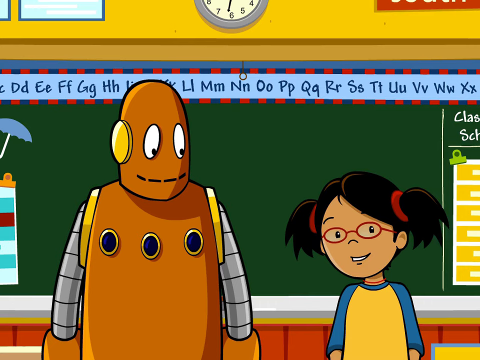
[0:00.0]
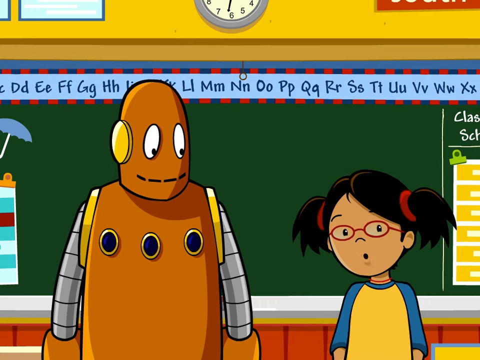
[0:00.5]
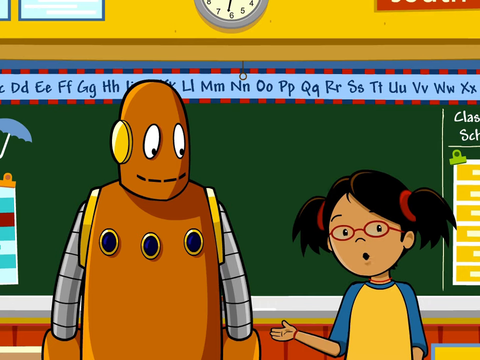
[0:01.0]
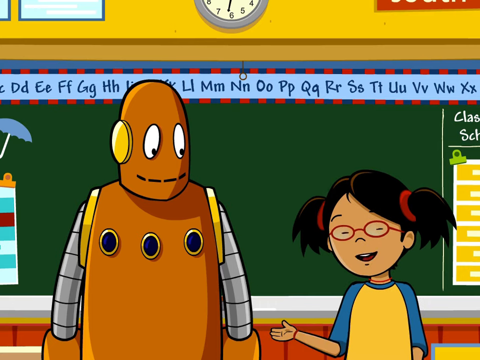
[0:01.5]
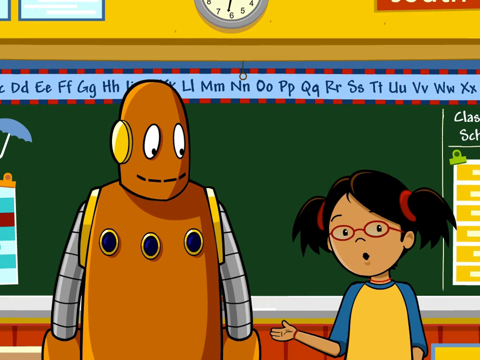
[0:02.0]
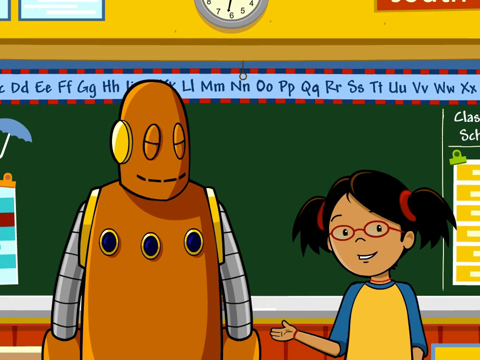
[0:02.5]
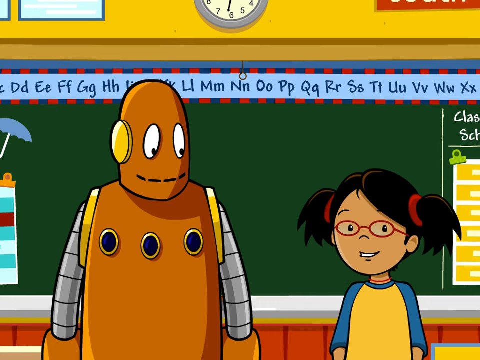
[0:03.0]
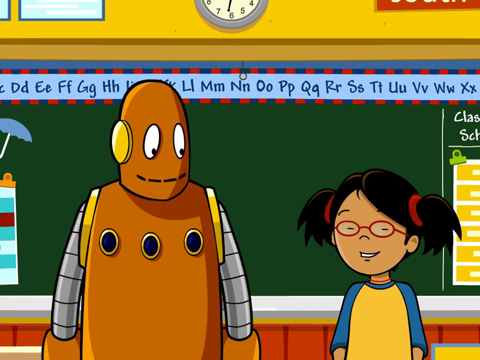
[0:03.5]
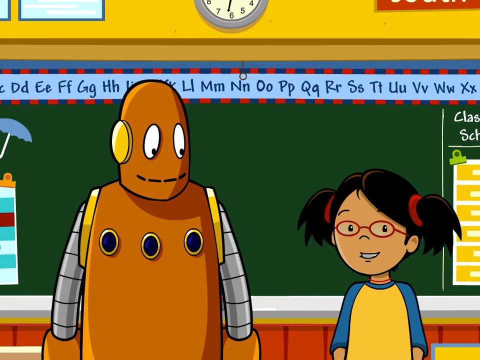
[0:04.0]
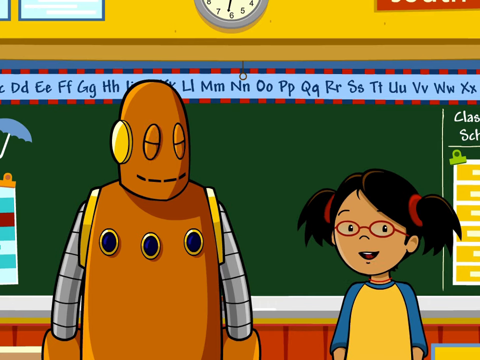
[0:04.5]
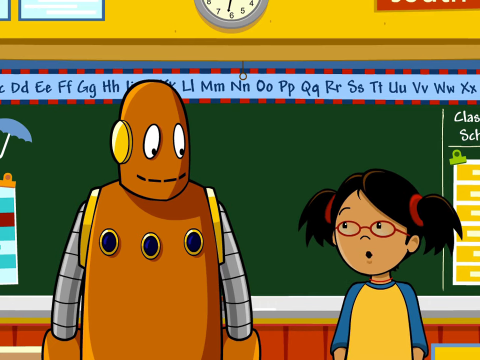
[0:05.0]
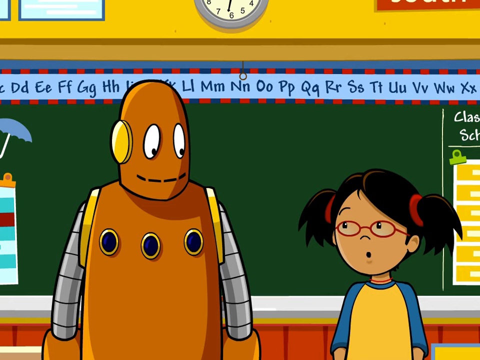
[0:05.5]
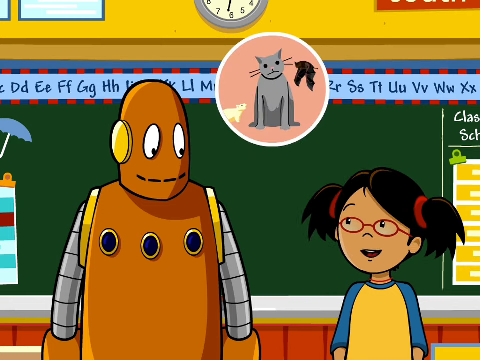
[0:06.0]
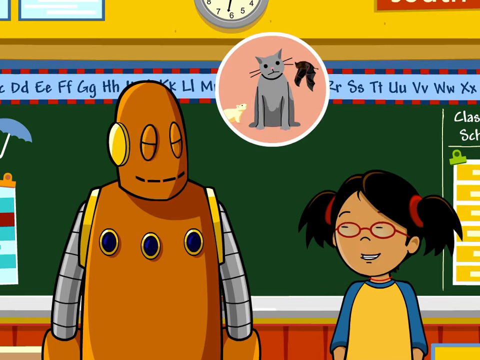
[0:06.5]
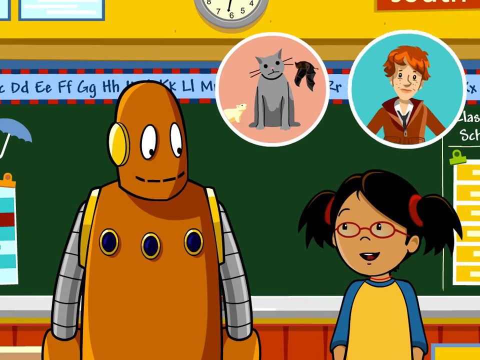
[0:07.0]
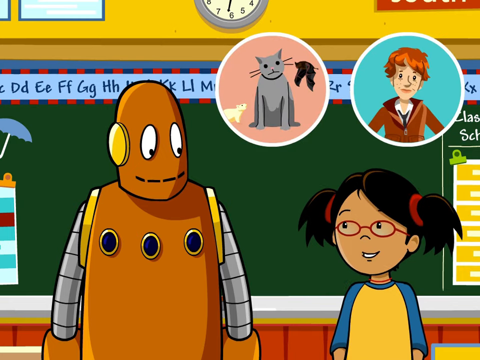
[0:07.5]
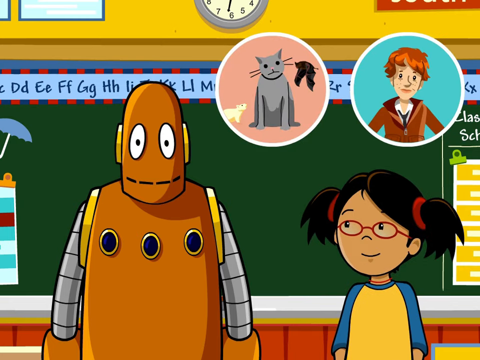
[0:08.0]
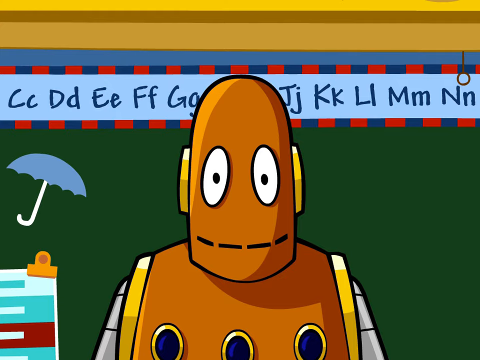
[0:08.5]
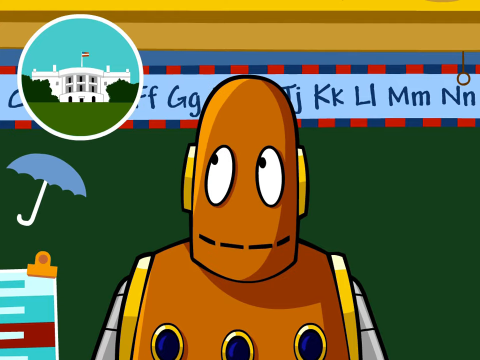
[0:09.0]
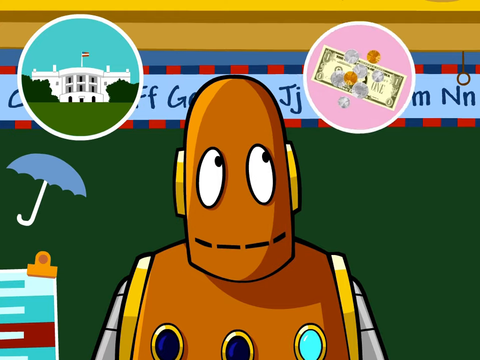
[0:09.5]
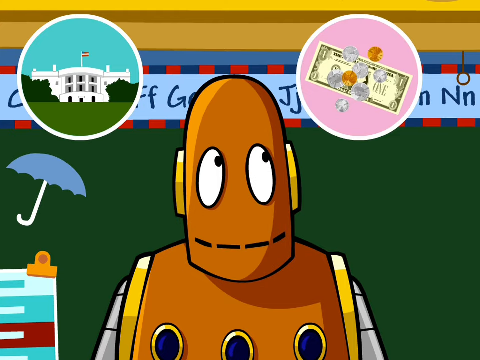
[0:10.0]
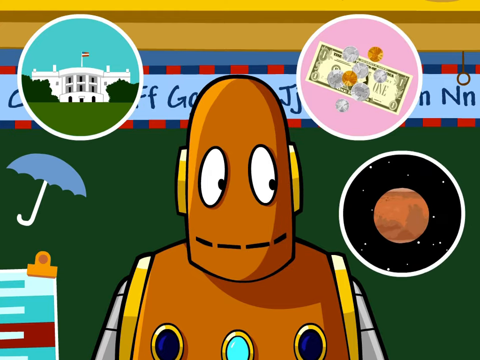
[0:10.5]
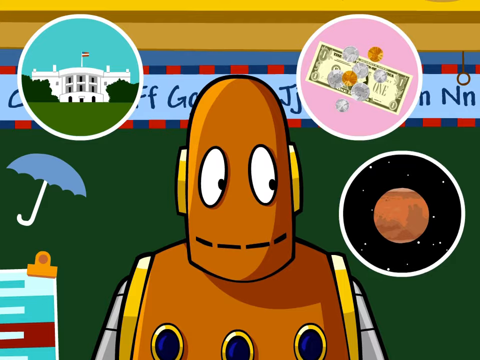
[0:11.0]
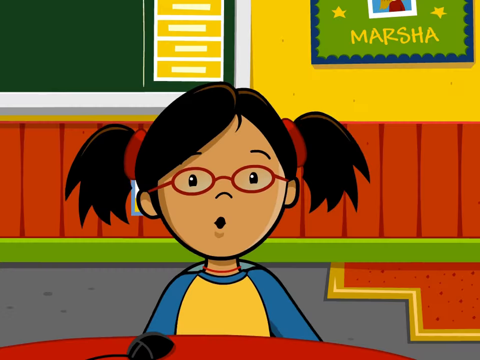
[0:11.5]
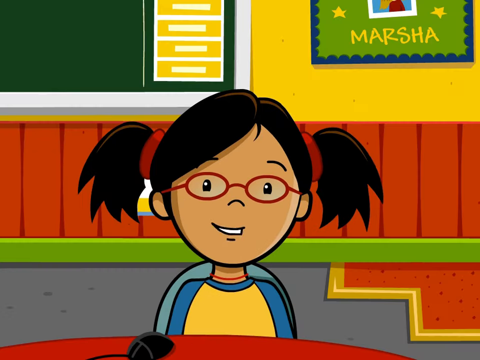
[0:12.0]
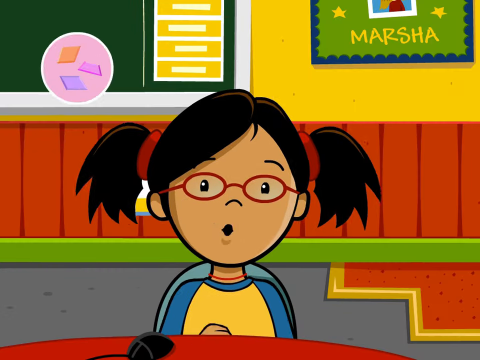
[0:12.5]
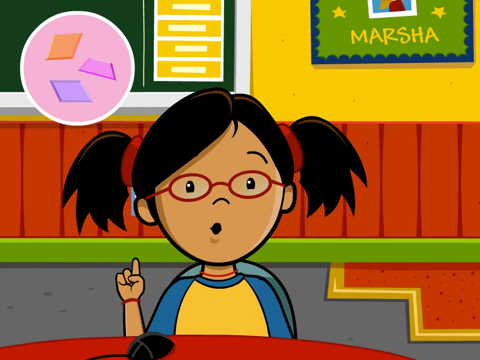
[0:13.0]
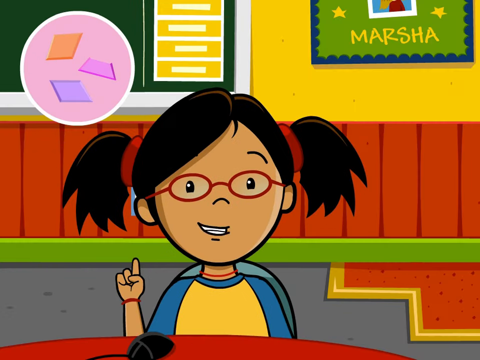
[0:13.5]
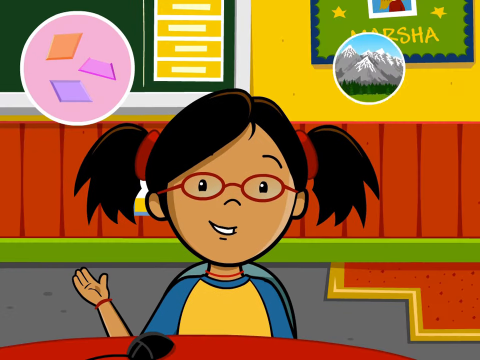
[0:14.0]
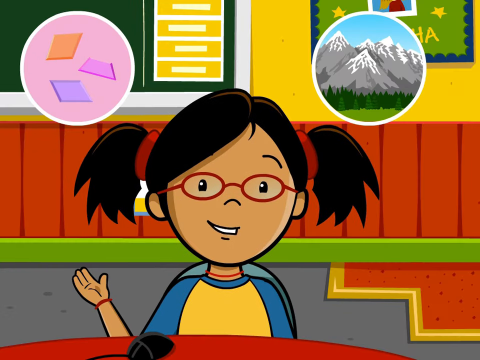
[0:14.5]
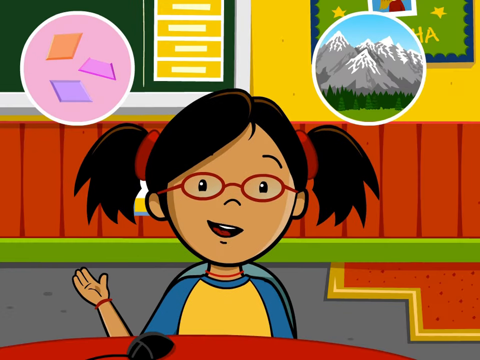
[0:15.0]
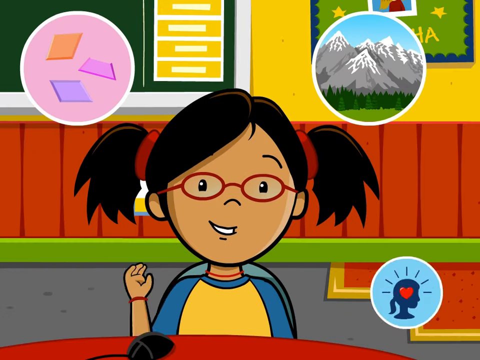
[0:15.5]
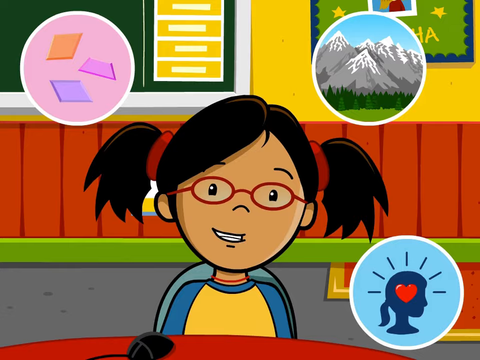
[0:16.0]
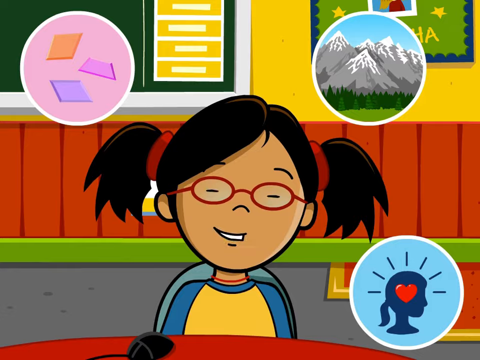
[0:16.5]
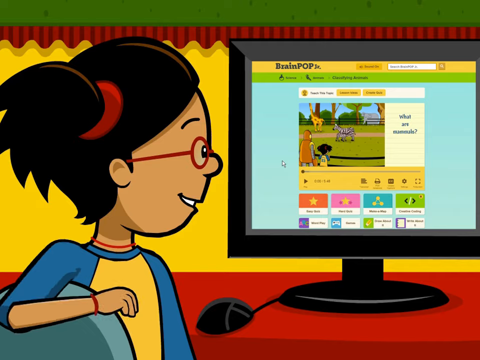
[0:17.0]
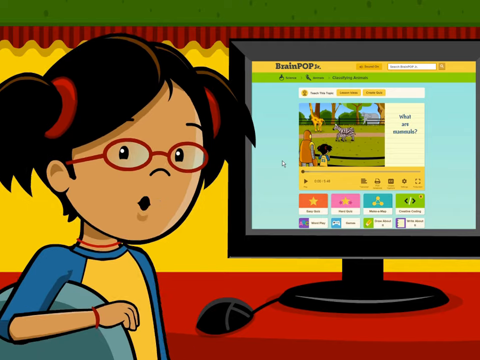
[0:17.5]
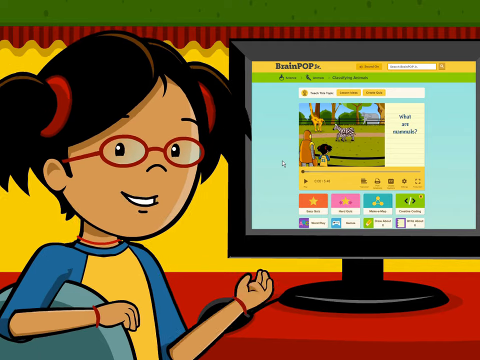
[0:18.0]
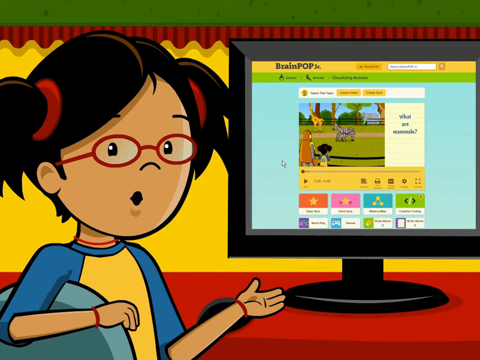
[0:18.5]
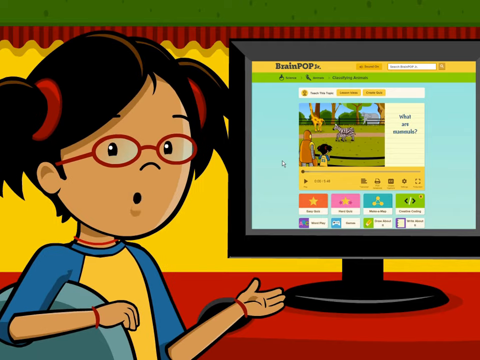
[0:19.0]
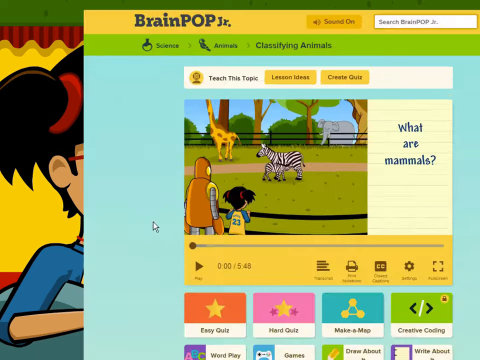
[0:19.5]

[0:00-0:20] A robot and a young girl in pigtails appear to be in some kind of classroom. The girl is talking while the robot looks at her. A cat and a woman pop up on the screen. The White House, money and a planet appear, and then the girl sits down. Mountains and what looks like some kind of paper appear, along with a head with a heart in it, as she talks. The view then turns to a computer, where Brain Pop Junior pops up and shows "what kind of mammals are these." It looks almost like a computer screen.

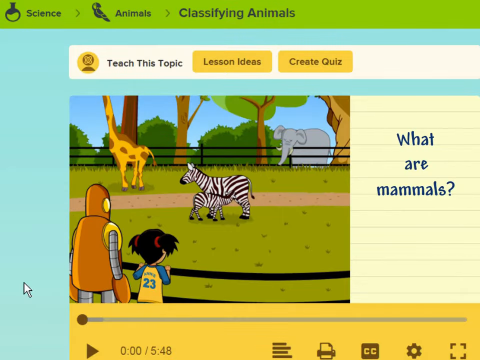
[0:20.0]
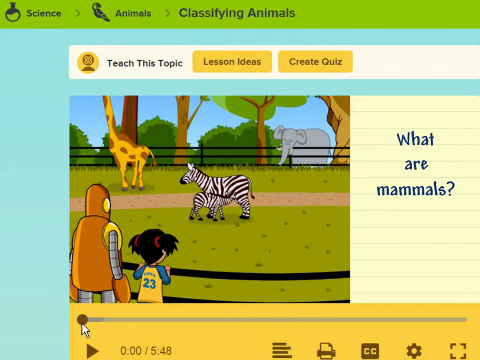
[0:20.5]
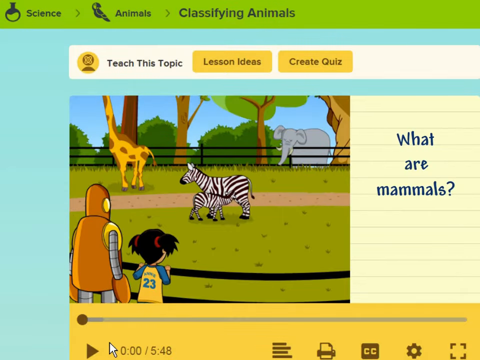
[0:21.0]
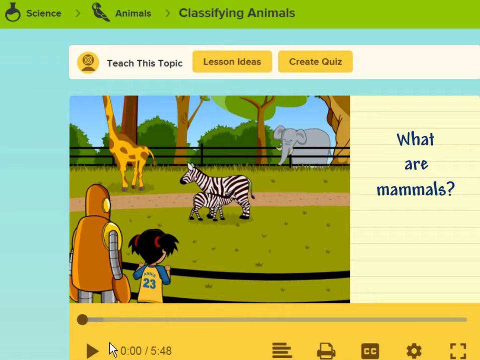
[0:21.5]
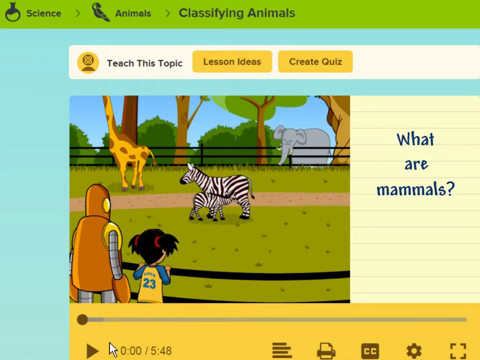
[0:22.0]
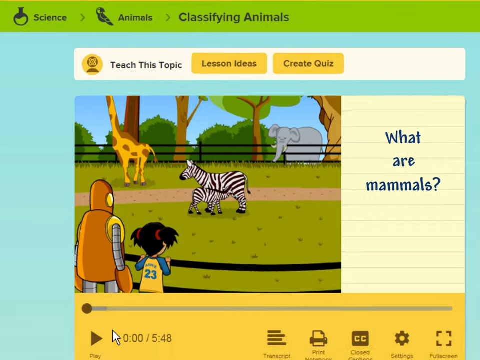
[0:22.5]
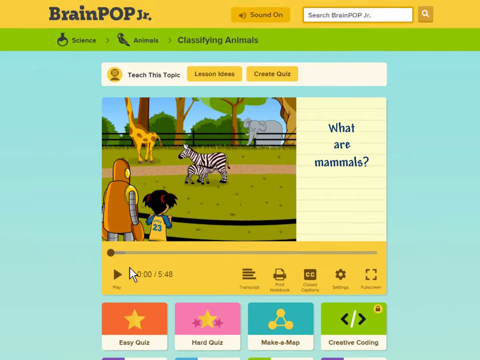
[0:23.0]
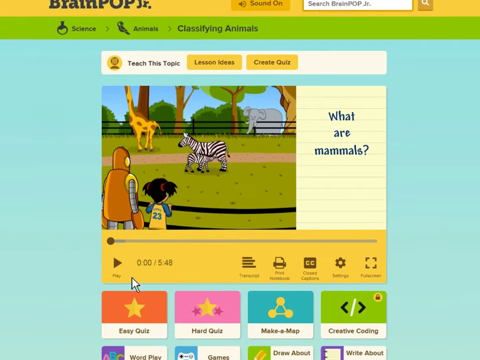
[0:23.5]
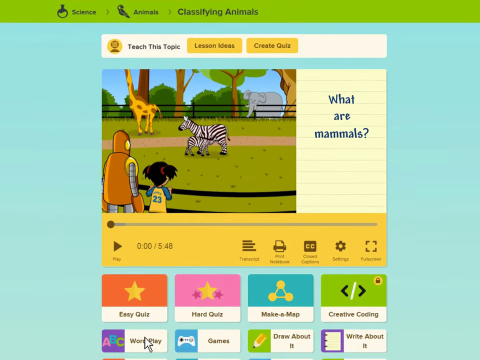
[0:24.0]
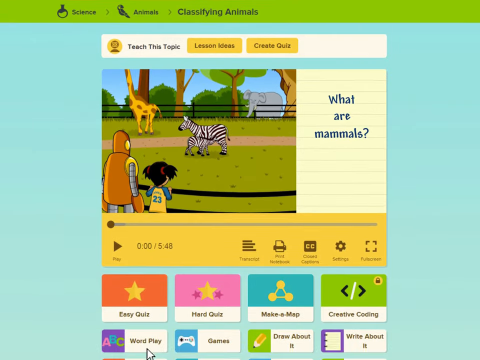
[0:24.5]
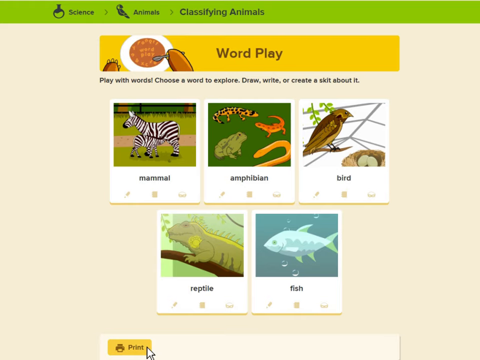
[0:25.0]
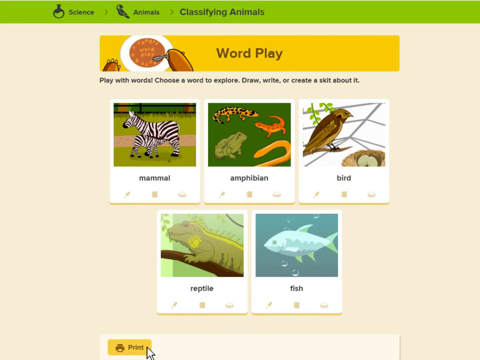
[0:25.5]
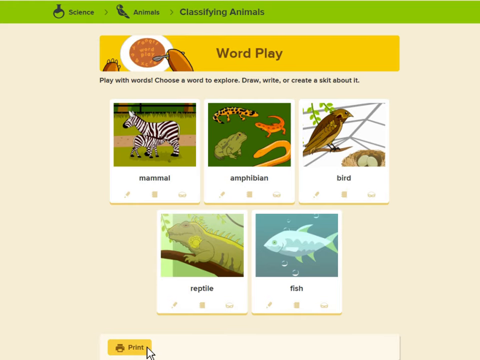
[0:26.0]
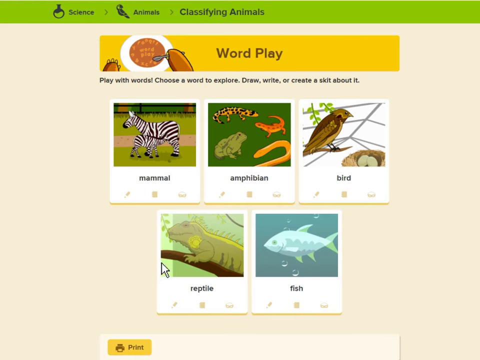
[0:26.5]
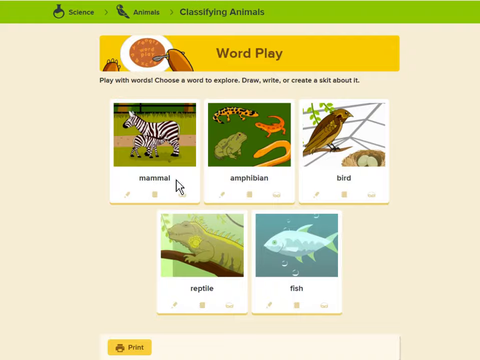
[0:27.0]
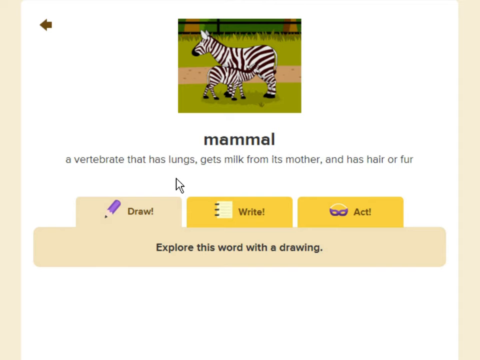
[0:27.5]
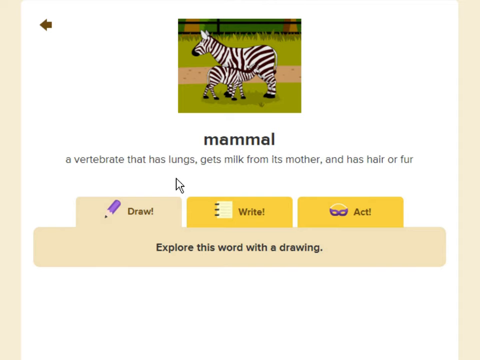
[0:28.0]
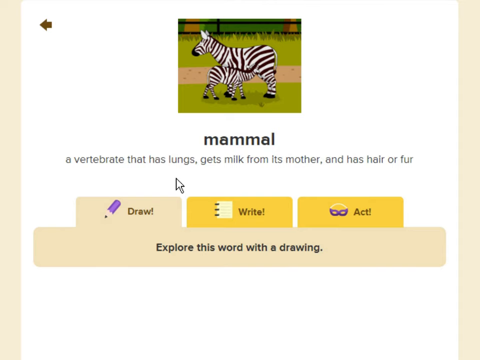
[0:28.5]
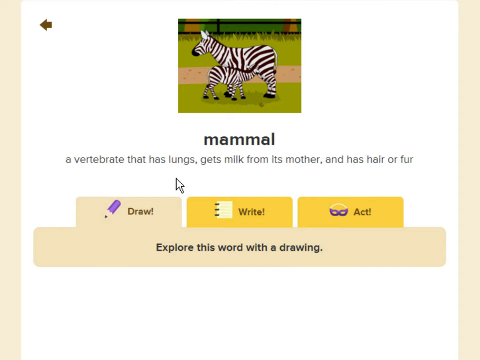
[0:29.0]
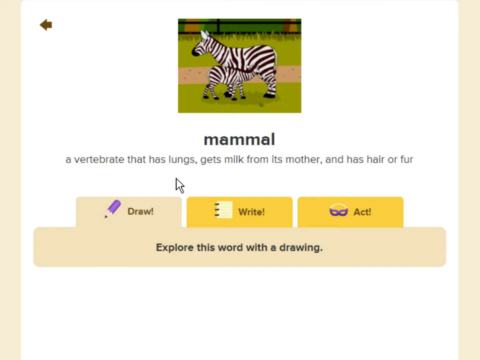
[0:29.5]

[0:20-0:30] Brain Pop Junior appears on what looks like a computer, with the text "what are mammals?" along with "teach this topic," "lesson ideas" and "create quiz." The robot and the young girl are looking into what looks almost like a zoo, with a giraffe, zebras and an elephant. The mouse cursor moves across the screen, which shows different places to go, labeled "wordplay," "mammal," "amphibian," "bird," "reptile" and "fish." Another screen then shows "mammal" with the text "a vertebrae that has lungs gets milk from its mother and has hair or fur" and "draw, write, or act." The screen then moves again. It seems to be going through some kind of computer programming.